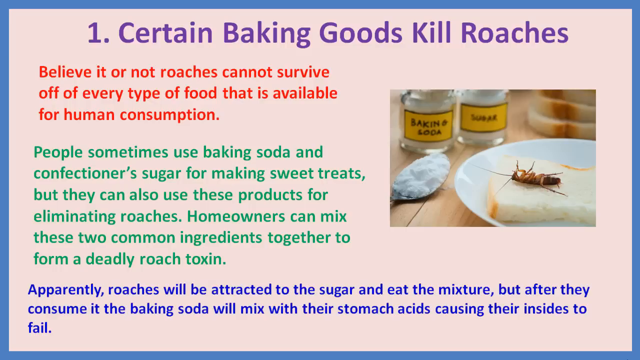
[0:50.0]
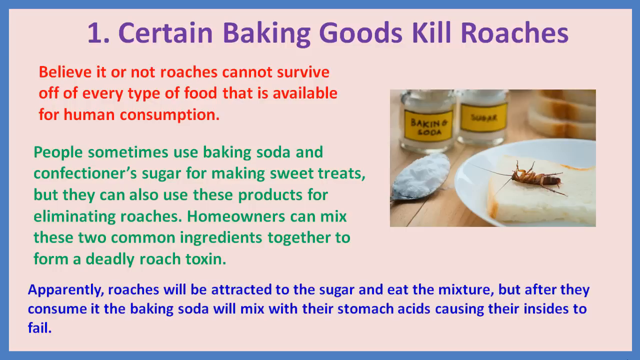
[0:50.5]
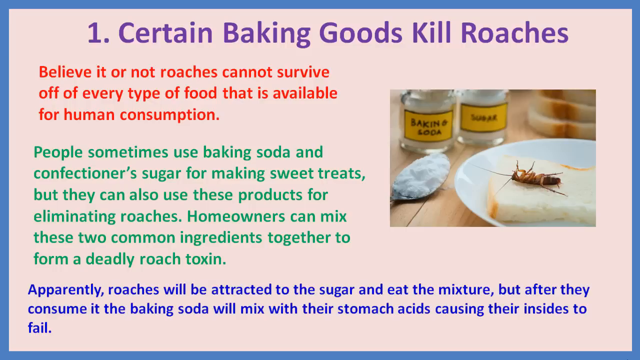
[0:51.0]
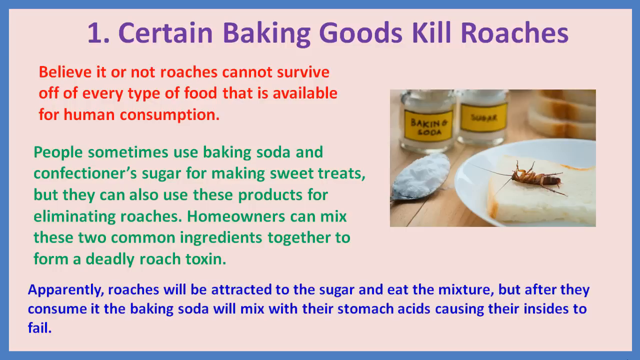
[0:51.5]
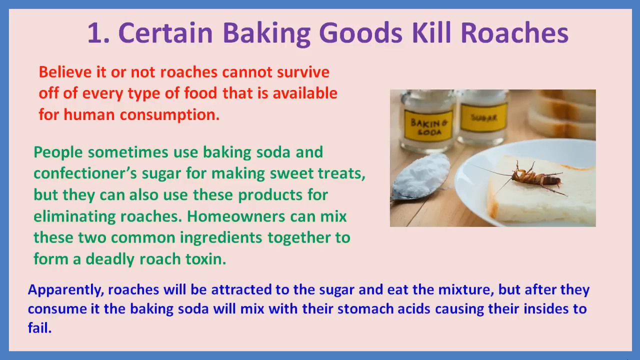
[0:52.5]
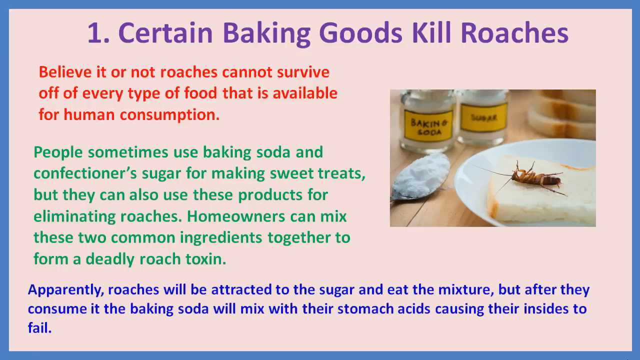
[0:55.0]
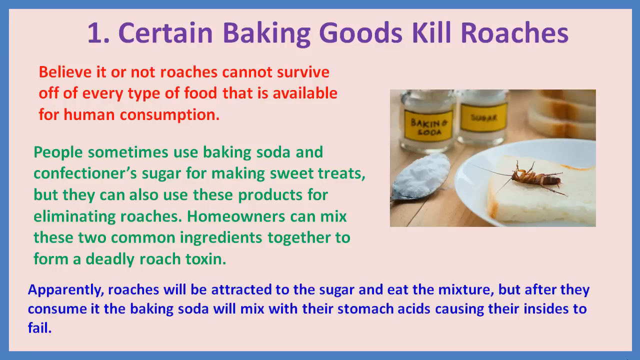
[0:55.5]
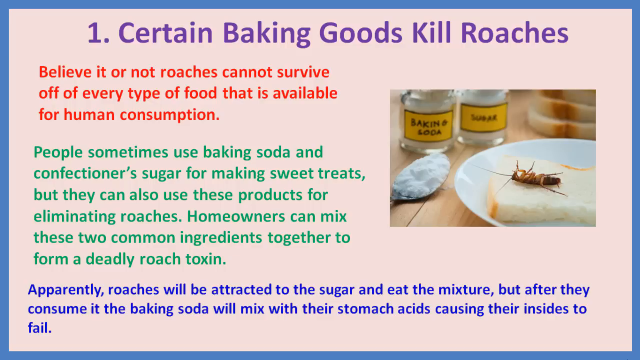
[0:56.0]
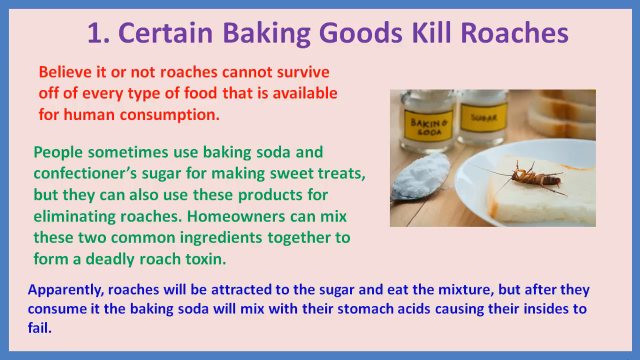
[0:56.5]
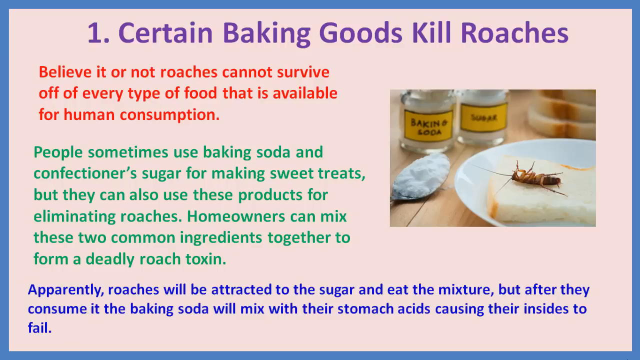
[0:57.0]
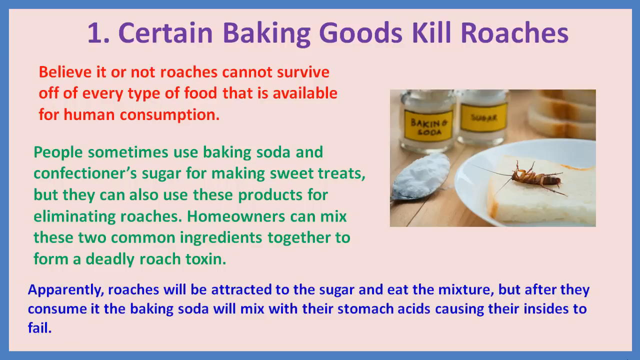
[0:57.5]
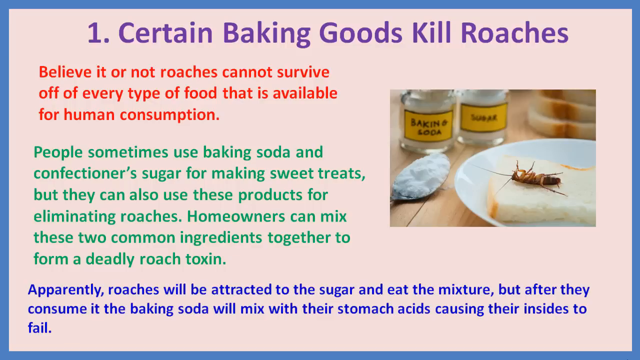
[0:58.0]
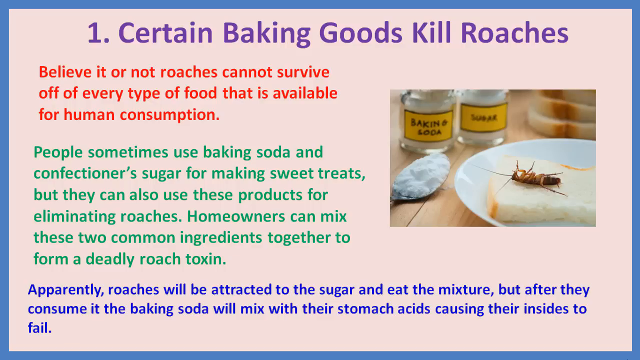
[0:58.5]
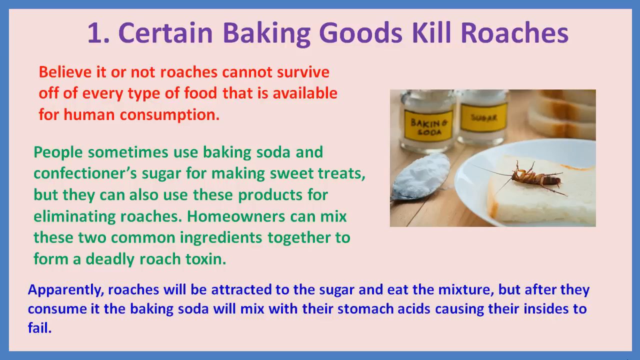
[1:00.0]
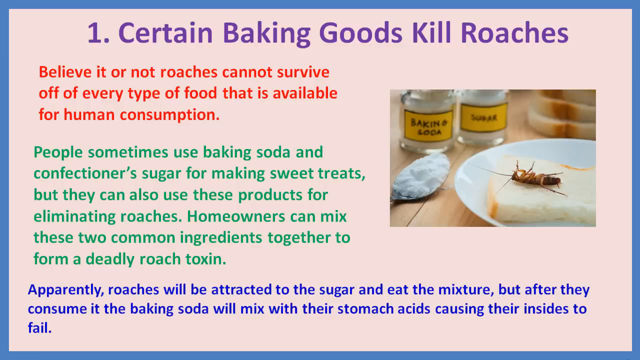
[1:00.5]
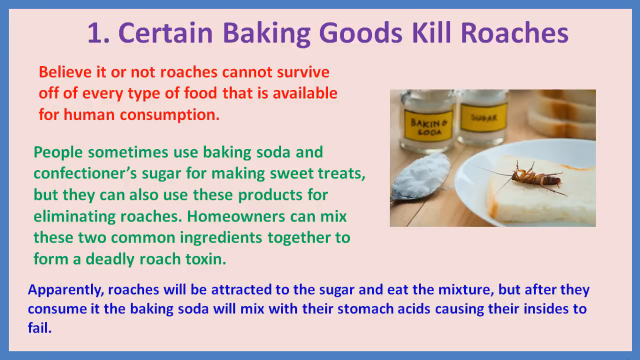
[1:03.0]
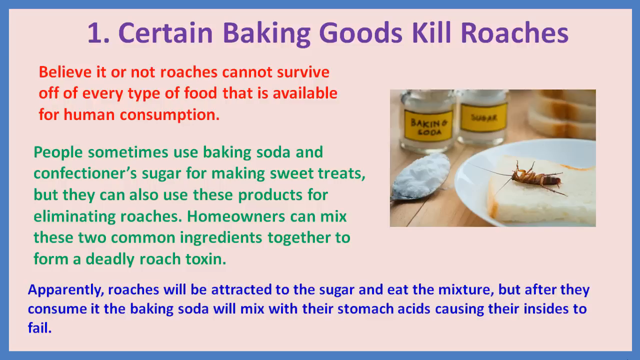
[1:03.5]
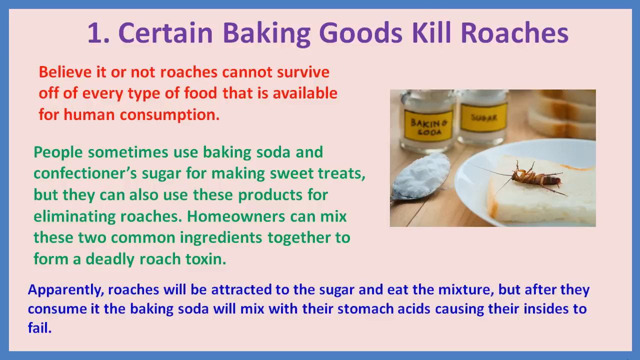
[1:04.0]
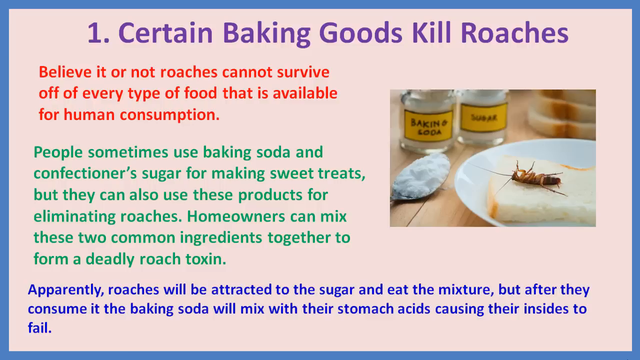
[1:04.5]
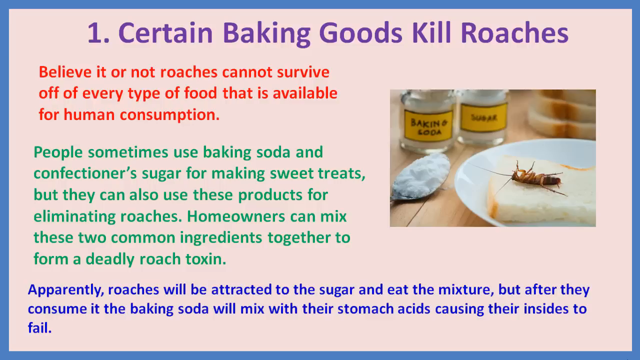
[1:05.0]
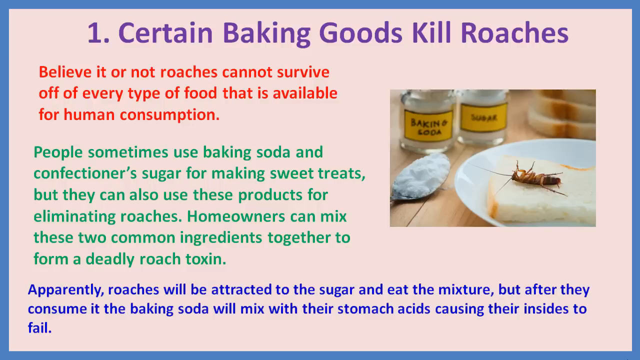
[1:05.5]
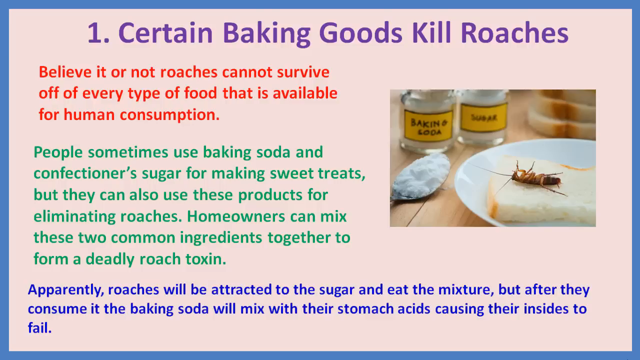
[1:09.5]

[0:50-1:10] A blue framed background surrounds a pink interior. Purple lettering at the top reads "one, certain baking goods kill roaches." Below it, orange lettering says "believe it or not roaches cannot survive off of every type of food that is available for human consumption." Green lettering below reads "people sometimes use baking soda and confectioner sugar for making sweet treats, but they can also use these products for eliminating roaches. Homeowners can mix these two common ingredients together to form a deadly roach toxin." Blue lettering below says "apparently roaches will be attracted to the sugar and eat the mixture, but after they consume it the baking soda will mix with their stomach acids causing their insides to fail." At the top right is a photograph: two glass bottles with yellow labels are in the background, the left one saying "baking soda" and the right one "sugar," all on a brown wooden table. A silver spoon with white powder on it is on the left side, three slices of brown bread are on the right side, and a white plate at the bottom right holds a small piece of bread and a dead roach with orange or black tentacles lying on it.